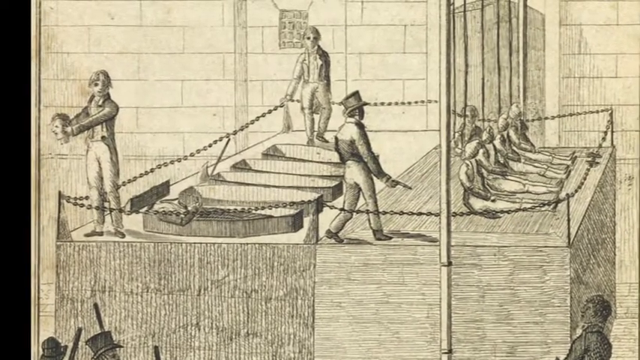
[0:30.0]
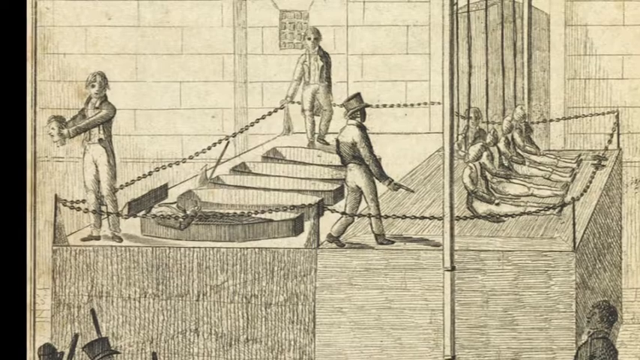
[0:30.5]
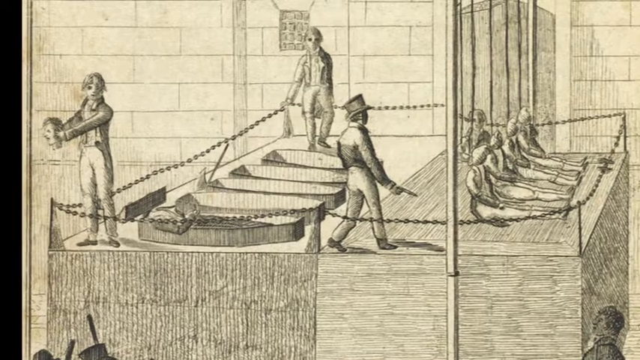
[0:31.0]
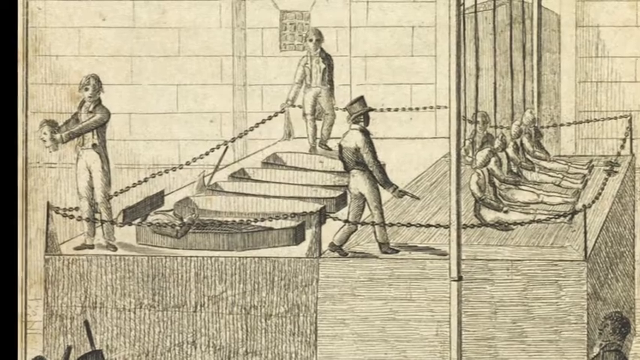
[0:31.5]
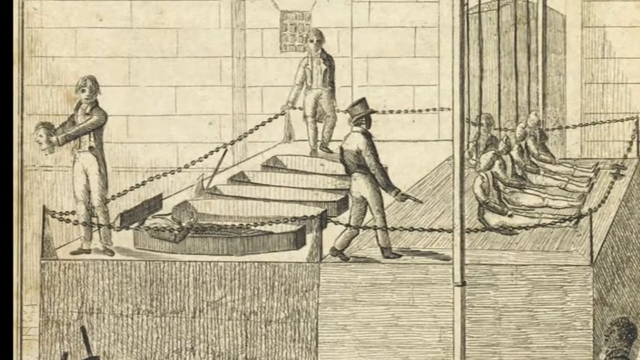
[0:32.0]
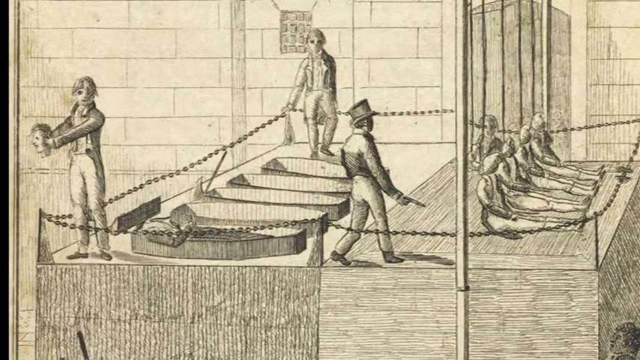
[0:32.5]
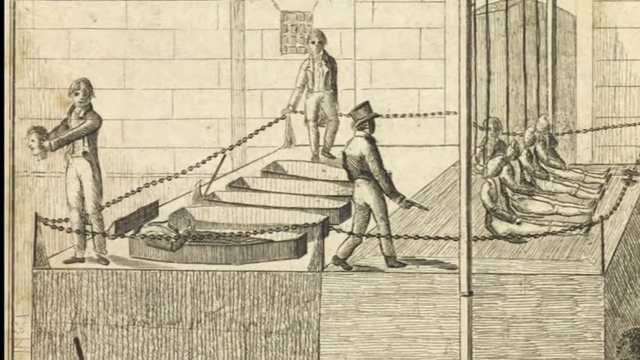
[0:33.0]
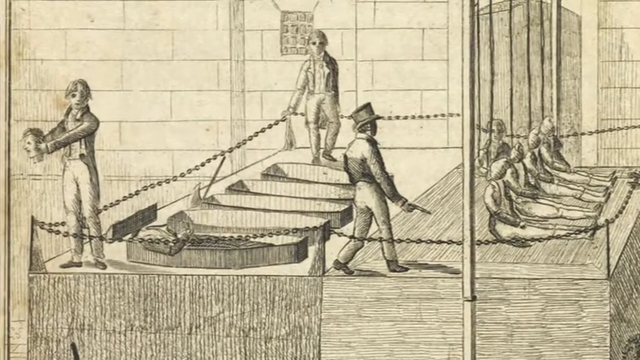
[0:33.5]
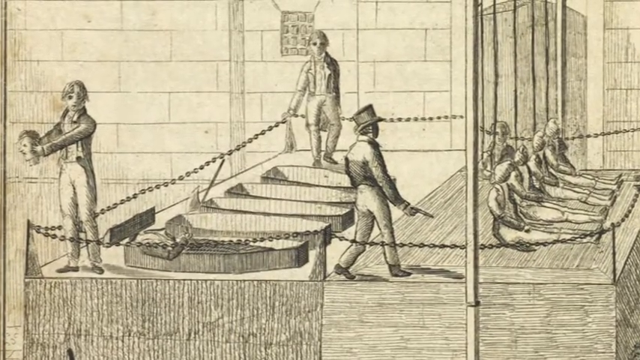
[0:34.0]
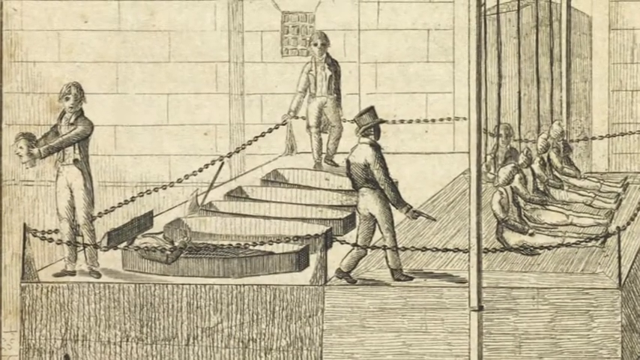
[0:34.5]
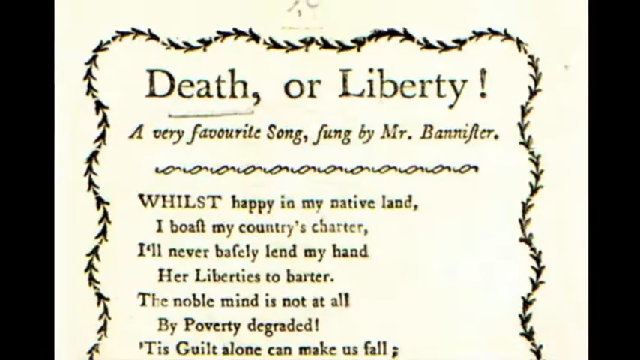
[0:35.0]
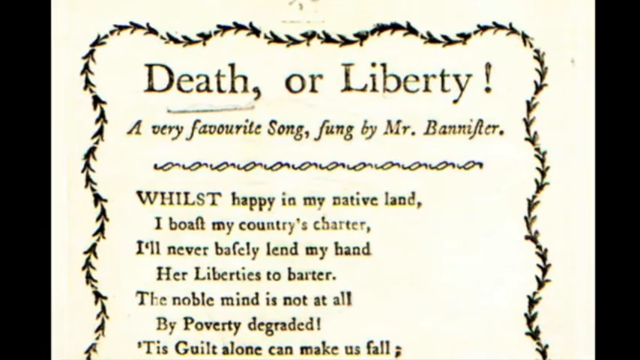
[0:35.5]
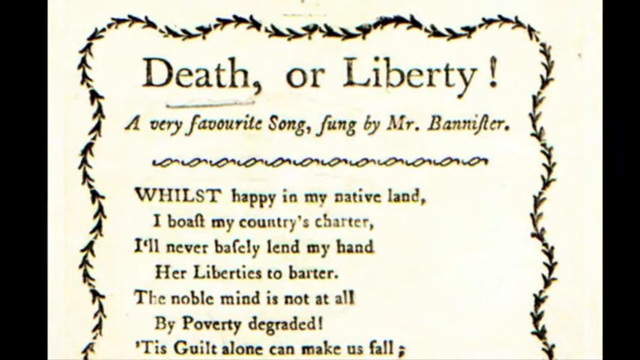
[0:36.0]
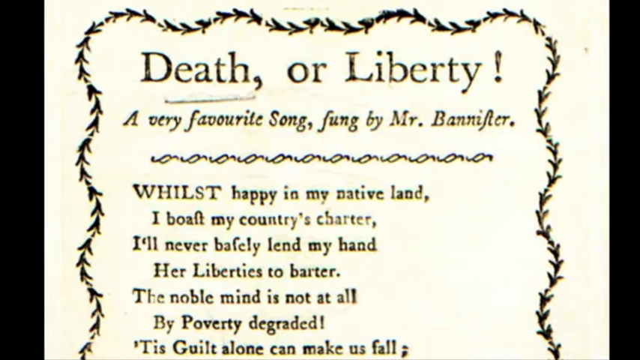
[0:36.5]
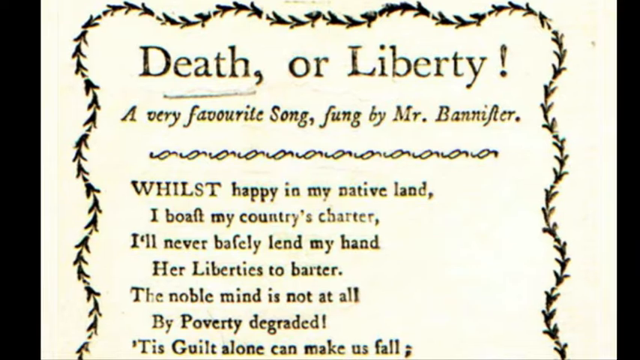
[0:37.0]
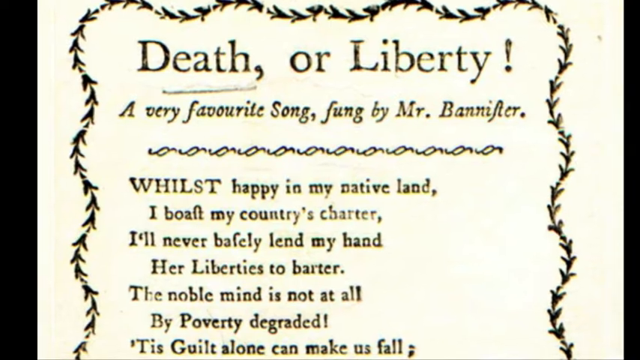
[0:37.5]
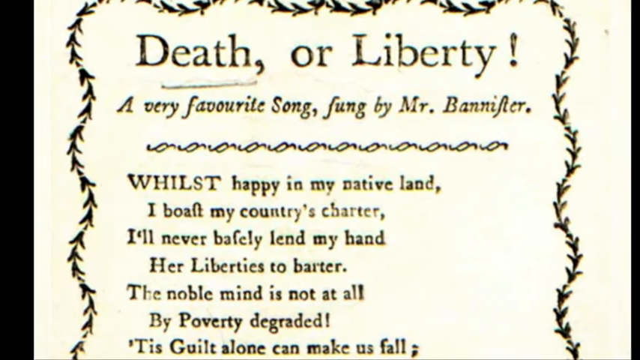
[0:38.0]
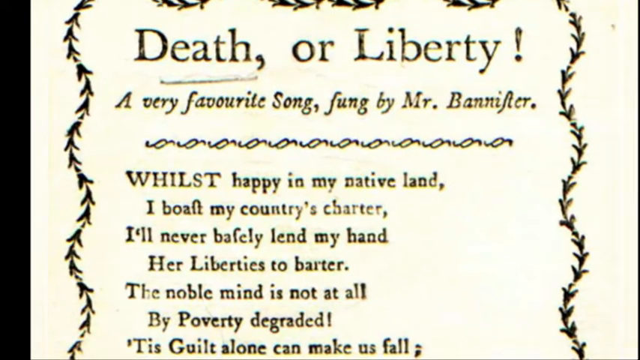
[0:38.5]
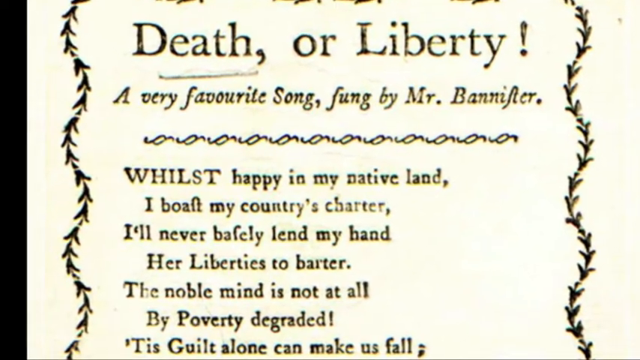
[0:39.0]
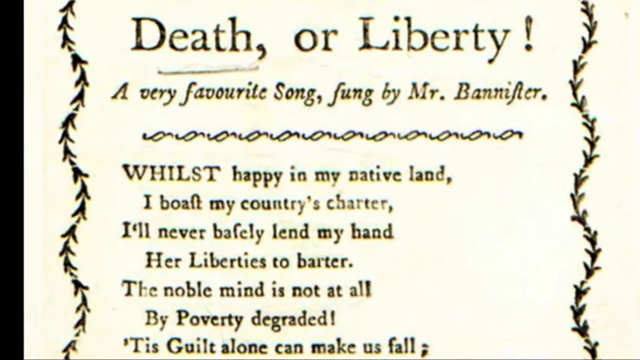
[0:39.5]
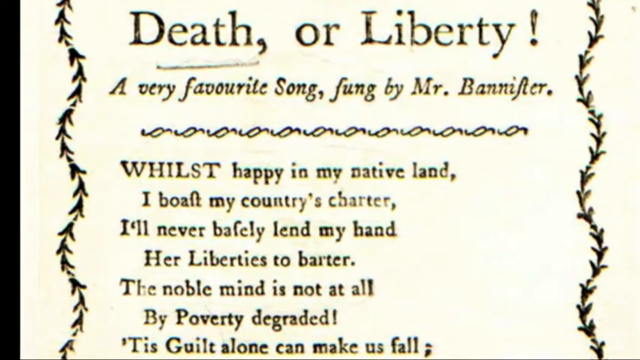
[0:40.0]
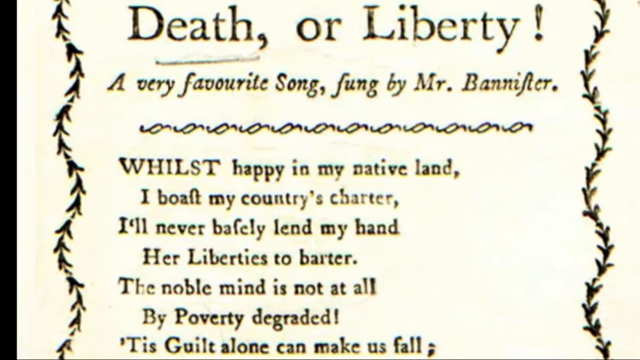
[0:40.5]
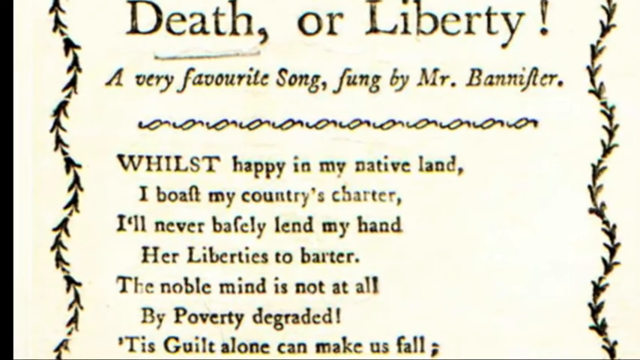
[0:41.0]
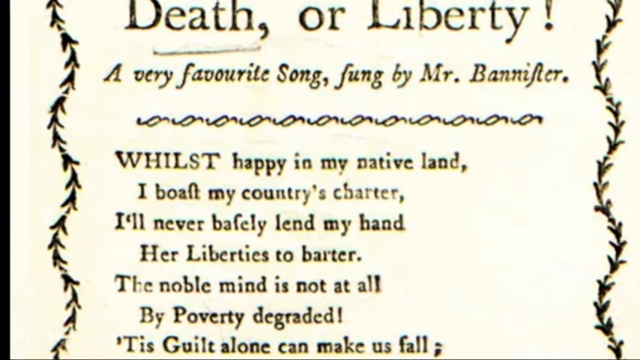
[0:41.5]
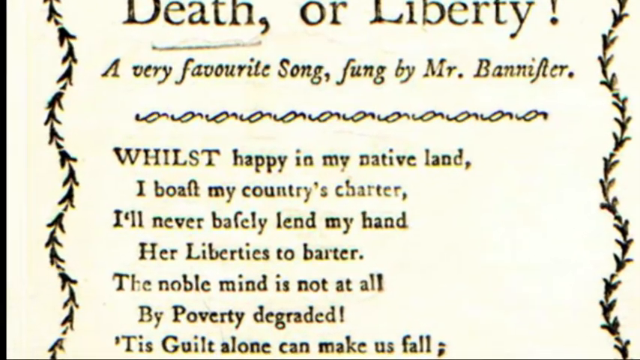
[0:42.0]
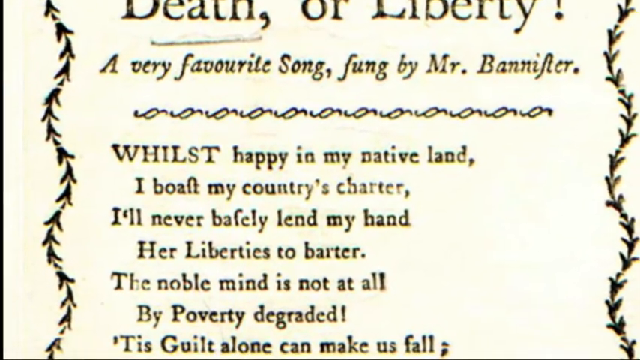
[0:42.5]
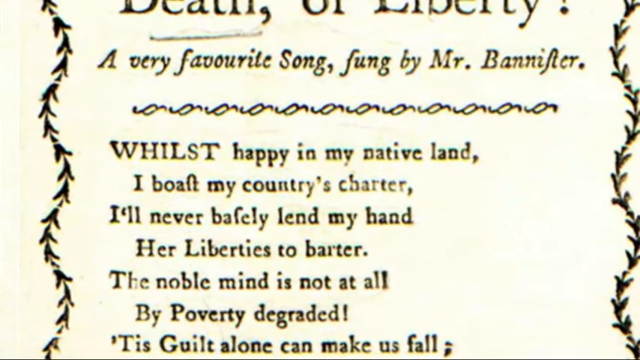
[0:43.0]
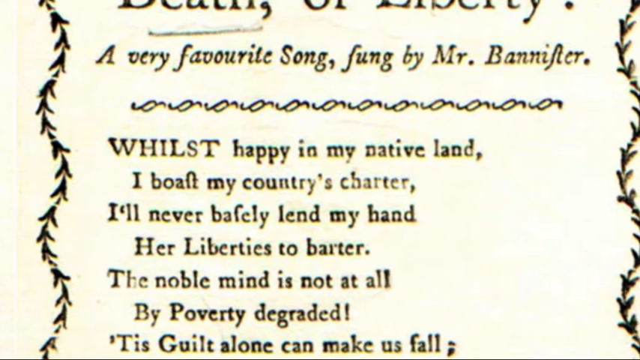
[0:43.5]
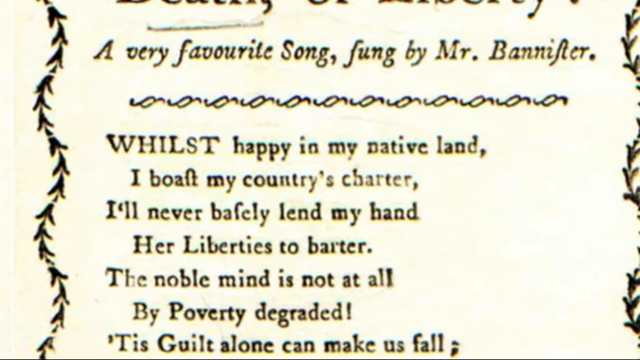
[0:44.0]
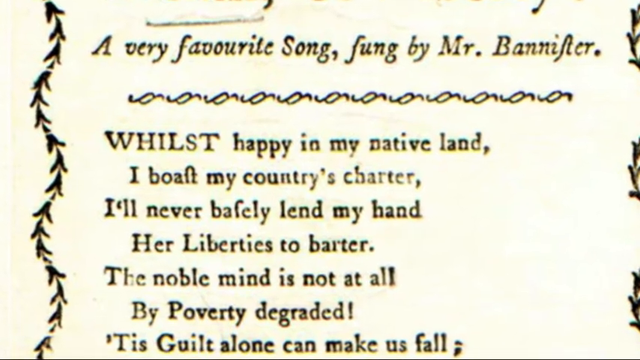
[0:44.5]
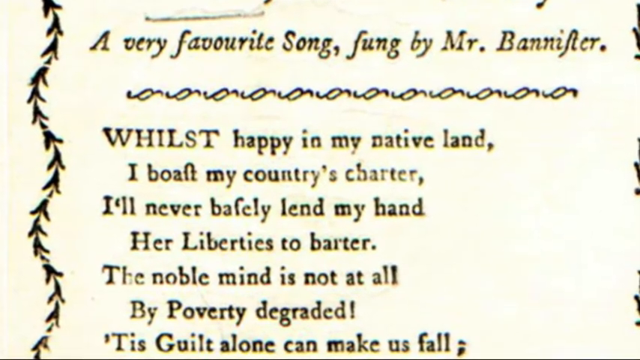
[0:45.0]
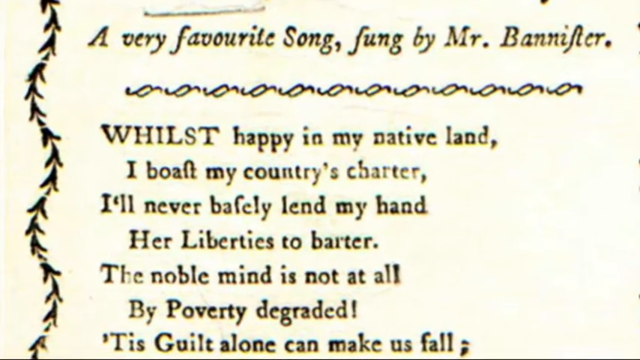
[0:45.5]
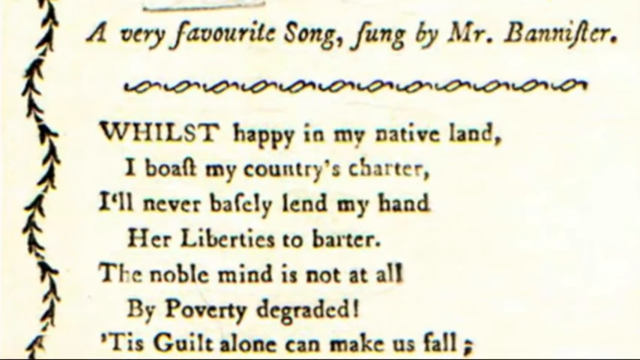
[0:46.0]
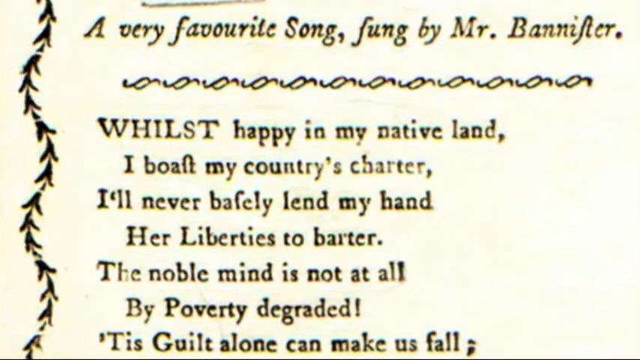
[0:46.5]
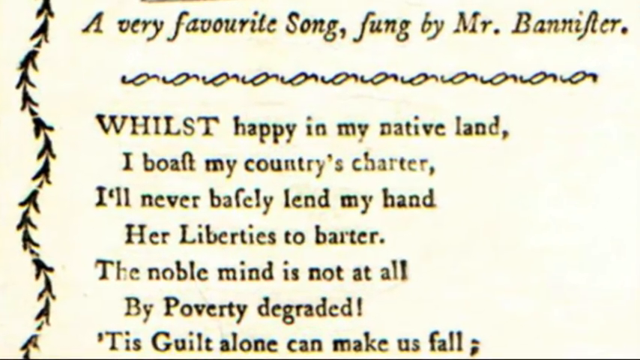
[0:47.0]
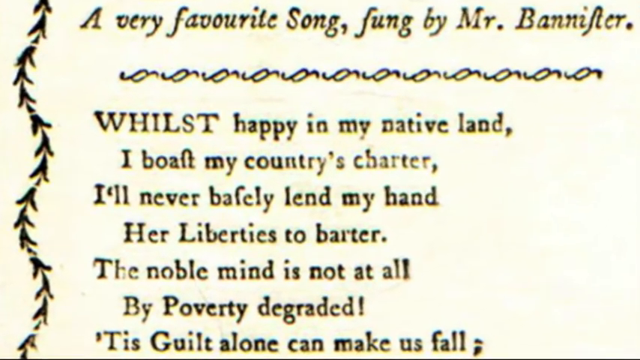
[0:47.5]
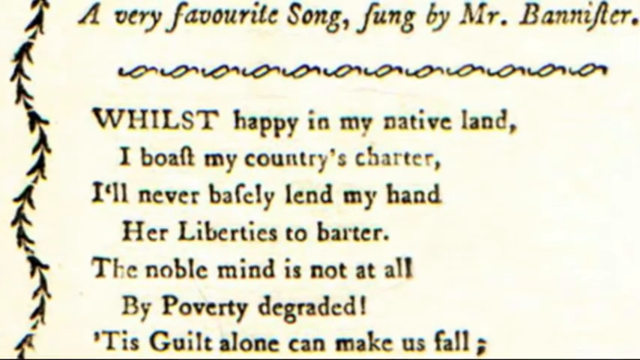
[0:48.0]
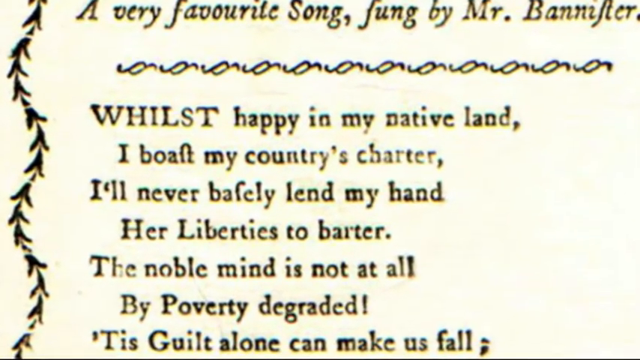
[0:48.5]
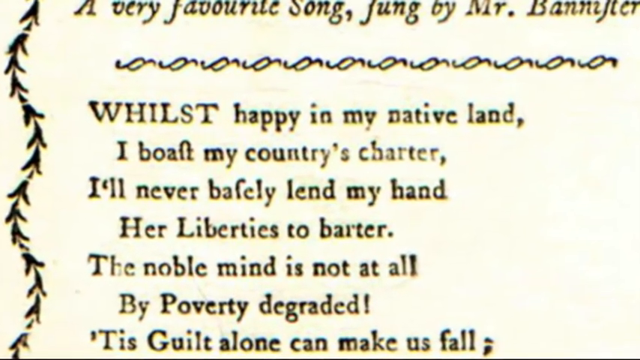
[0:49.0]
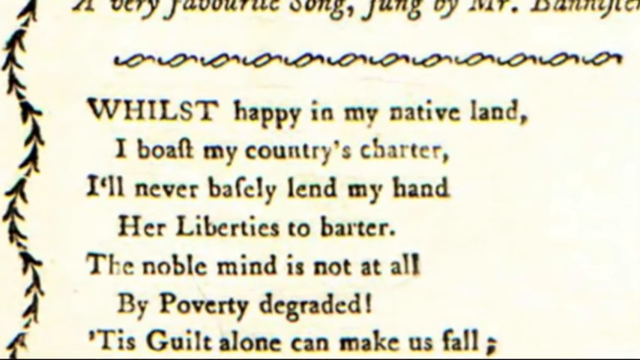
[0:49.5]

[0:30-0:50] The pencil drawing shows three people standing on the left side of an area. The far-left person appears to be holding a severed head with both hands while looking towards the camera. To the right, five coffins are laid down at the top of a platform. To the right of the coffins, a man in a top hat holds a weapon in his right hand. The last standing man, on the top half, is looking towards the camera. On the far right of the platform, a group of about five people are sitting down. The scene changes to a white paper with black writing that says "Death or Liberty, a very favorite song sung by Mr. Bannifer". Below that are the lyrics of the song, and the camera slowly zooms in on them. The lyrics shown include "Whilst happy in my native land, I vote my country's charter" and "The noble mind is not at all by poverty degraded".